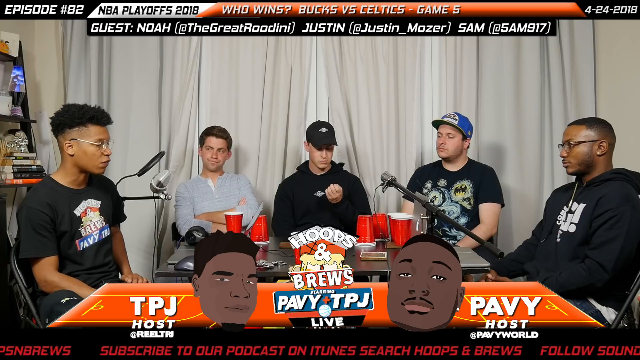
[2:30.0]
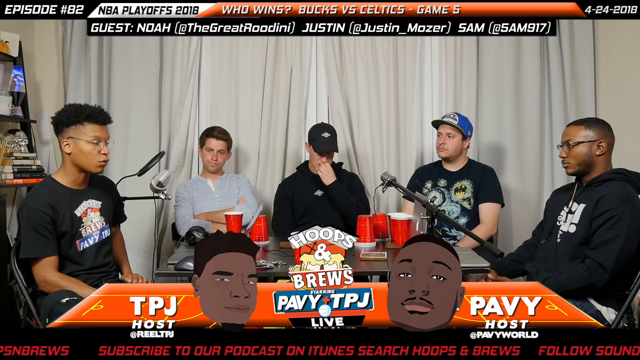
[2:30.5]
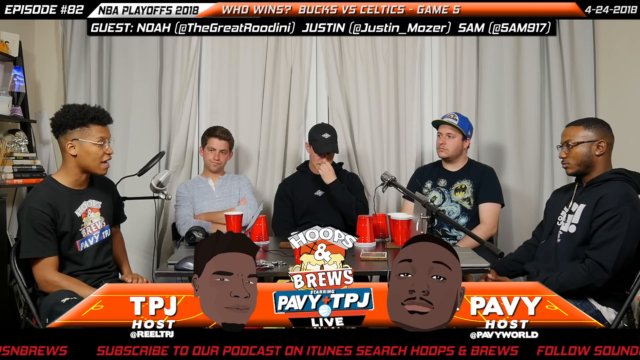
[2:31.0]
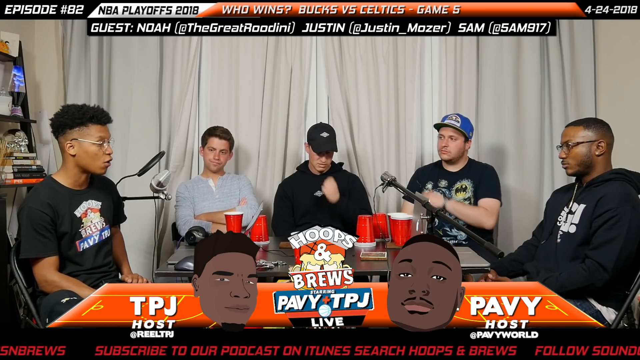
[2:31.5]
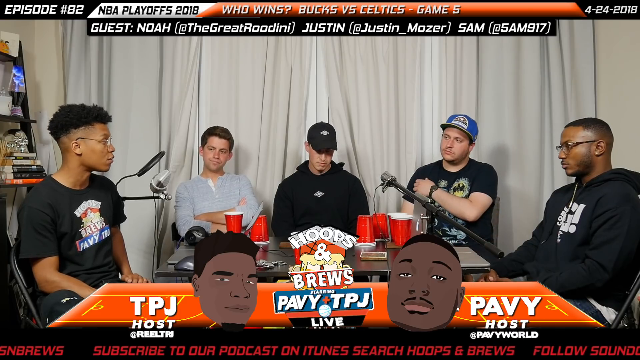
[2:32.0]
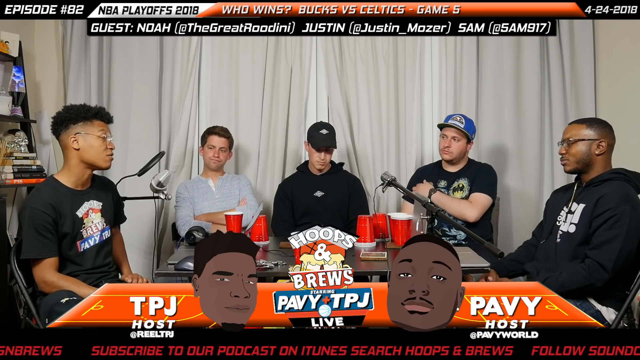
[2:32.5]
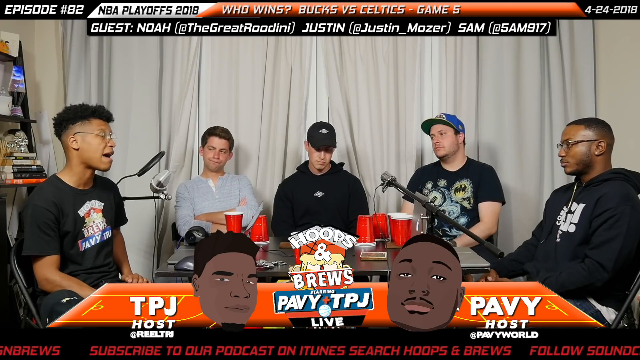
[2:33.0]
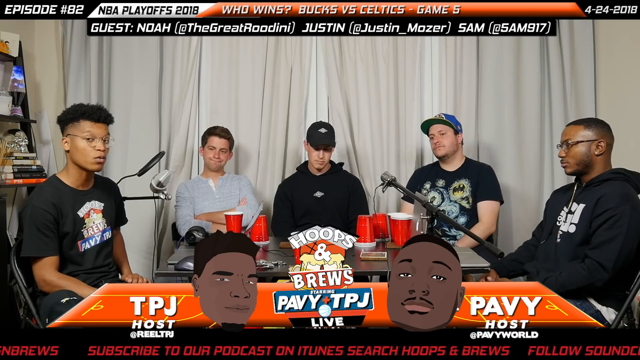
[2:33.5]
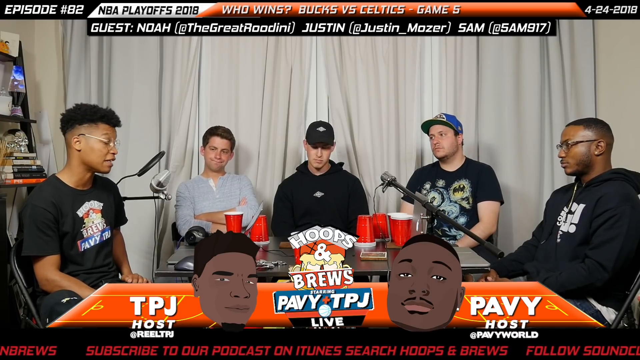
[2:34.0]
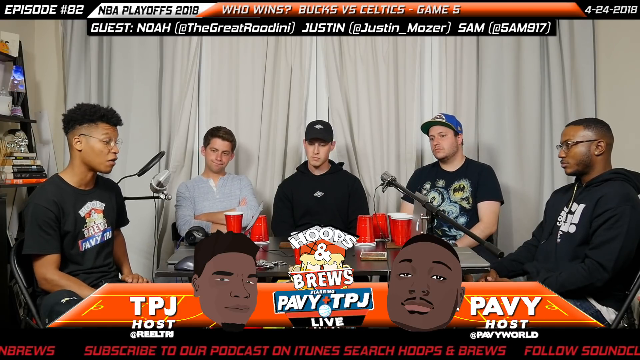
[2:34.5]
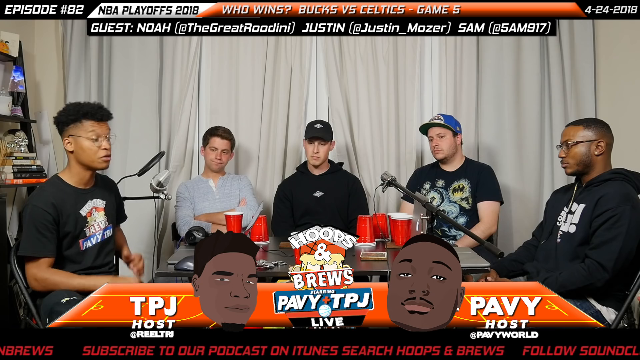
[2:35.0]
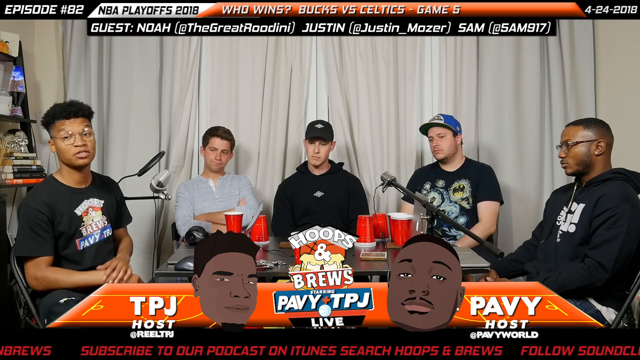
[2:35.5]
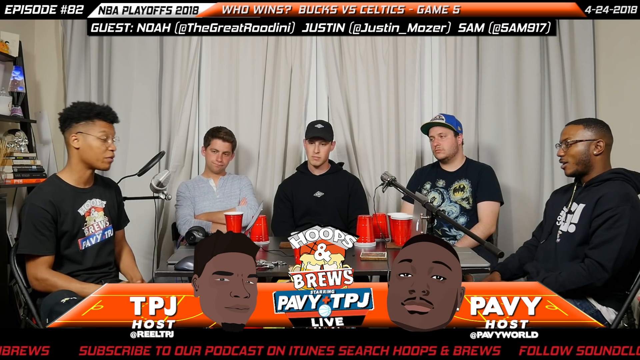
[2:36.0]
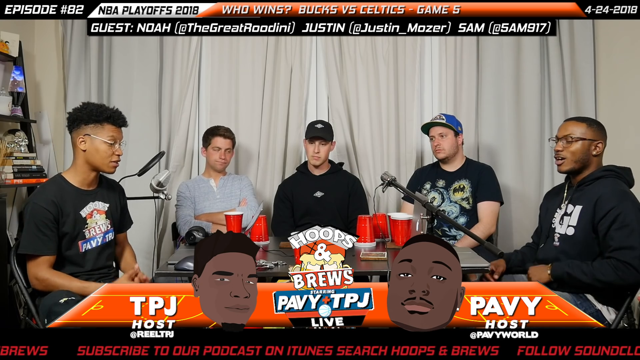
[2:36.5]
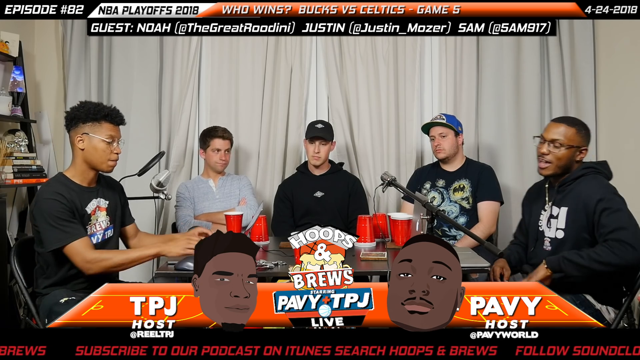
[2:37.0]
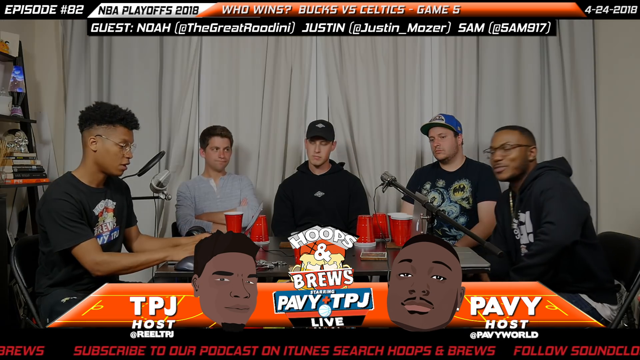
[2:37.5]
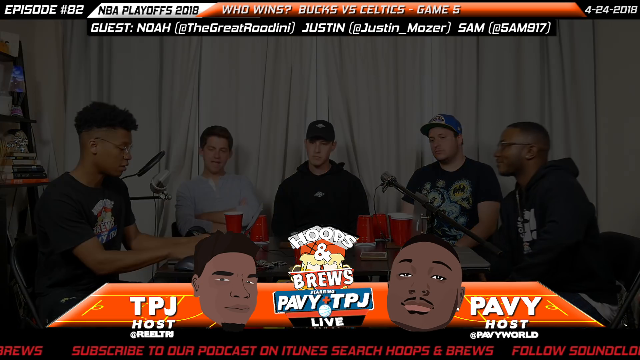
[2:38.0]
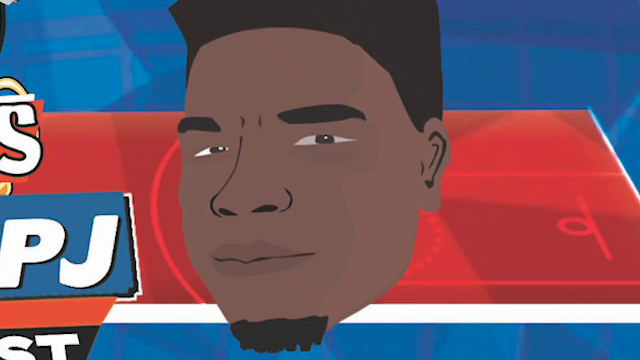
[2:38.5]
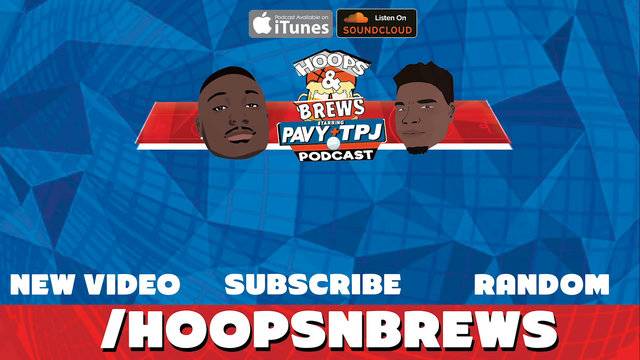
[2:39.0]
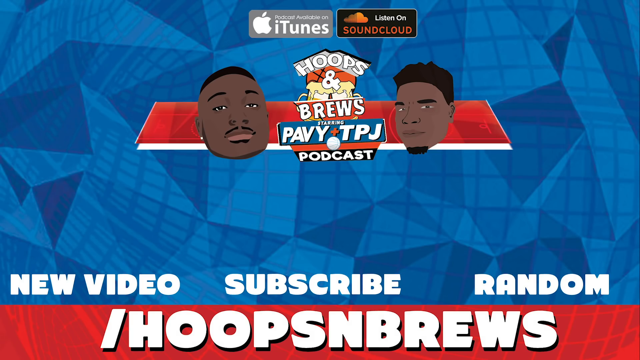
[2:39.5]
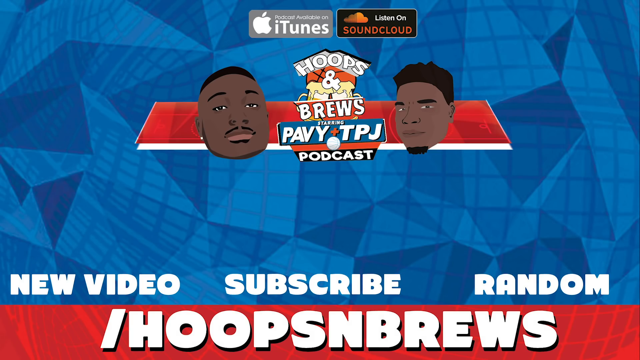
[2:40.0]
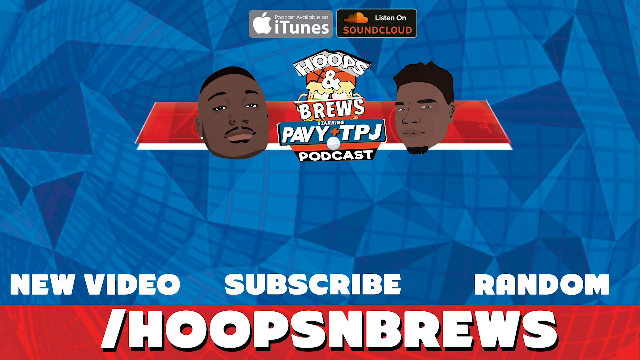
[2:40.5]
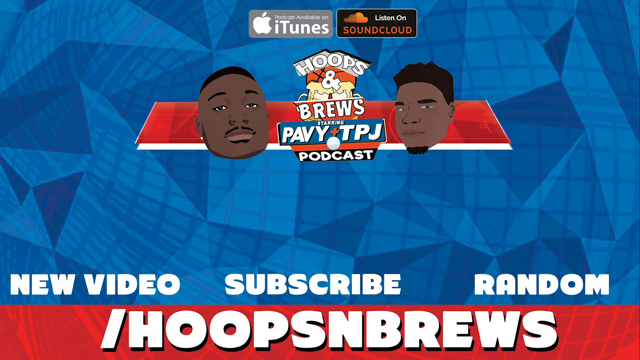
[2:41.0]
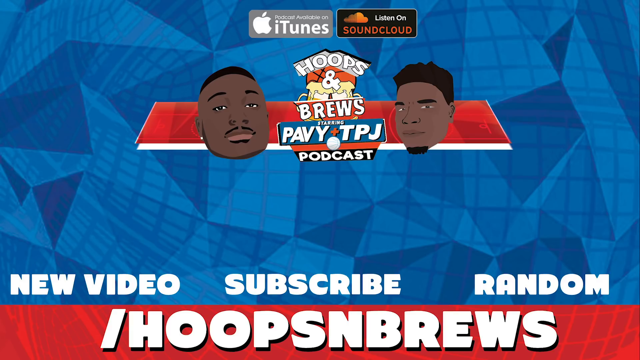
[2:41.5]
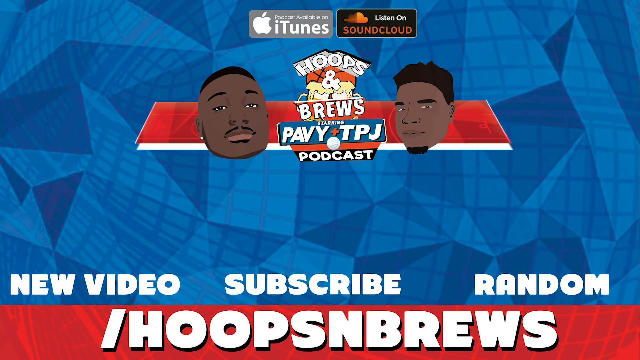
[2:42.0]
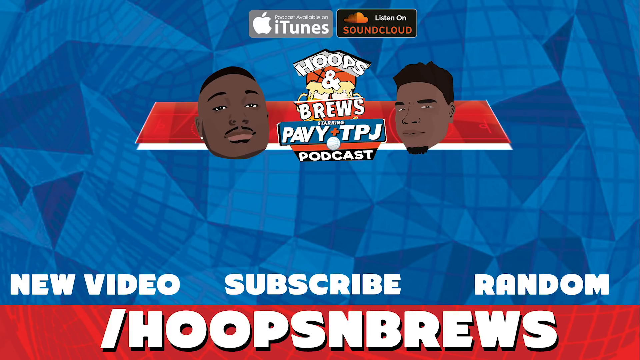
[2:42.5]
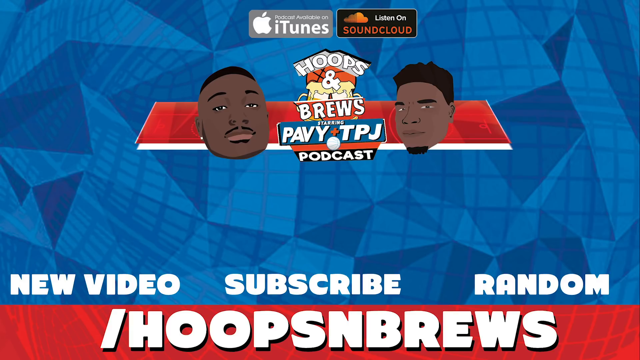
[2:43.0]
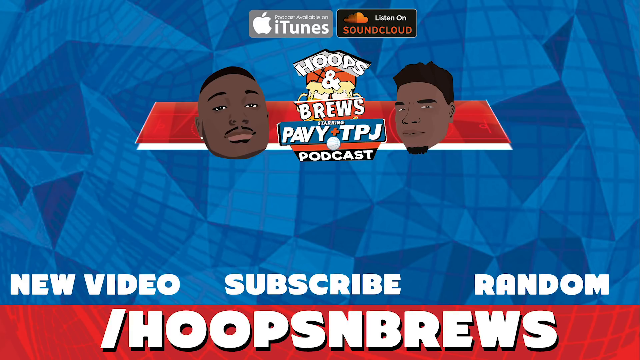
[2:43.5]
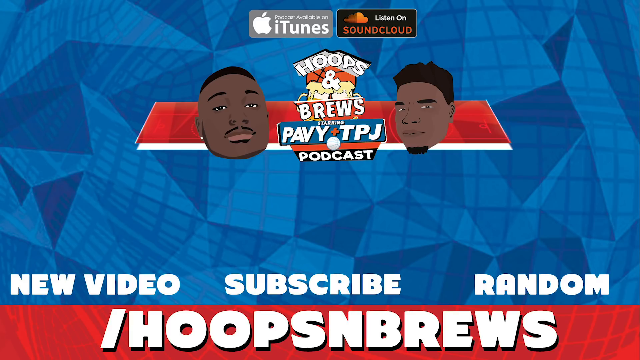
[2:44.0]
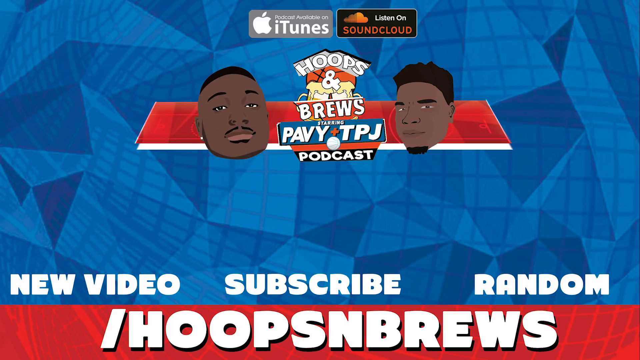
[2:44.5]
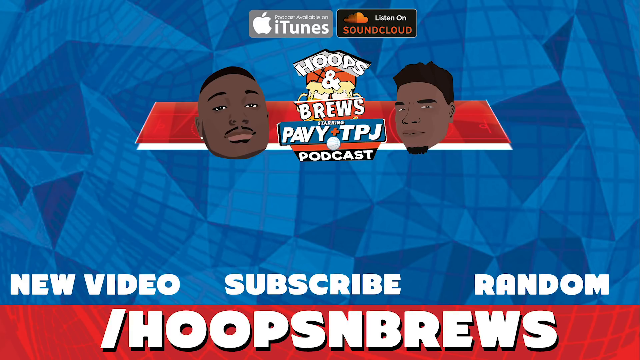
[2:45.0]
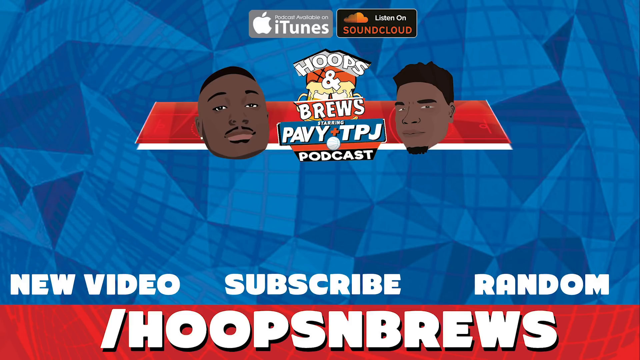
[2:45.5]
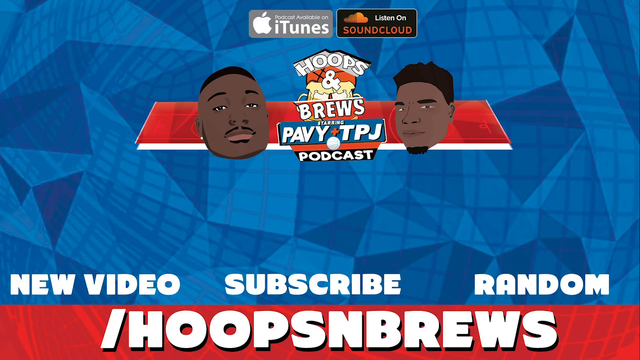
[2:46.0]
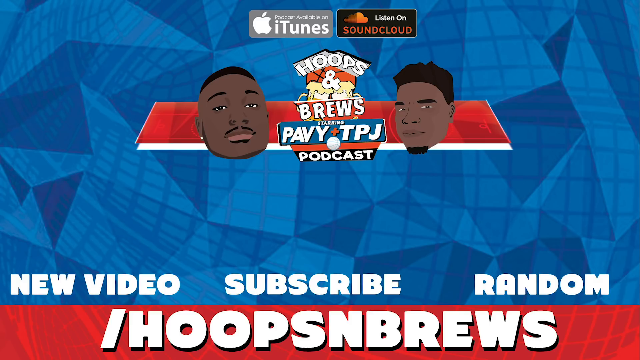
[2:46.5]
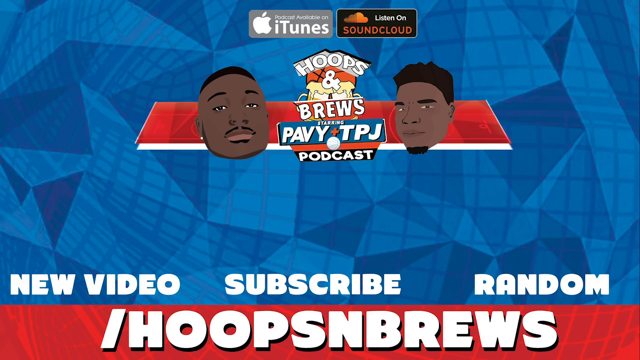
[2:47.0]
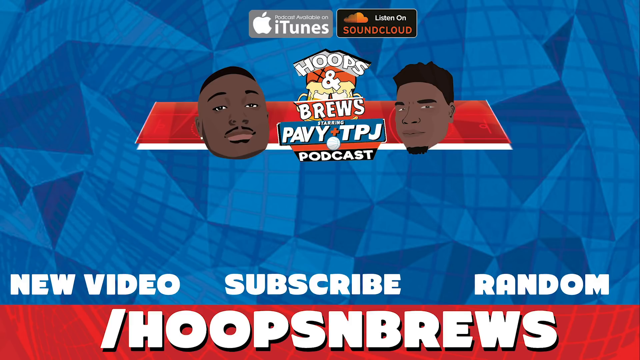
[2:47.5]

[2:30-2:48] On-screen text mentions a podcast, and other text reads "new video," "subscribe" and "random." The people talk to each other with a lot of passion. The top right side of the screen shows the date "April 24th, 2015," and the top left side shows number 82 and 2018. In this different scene, a tanker is in the background along with an orange strip.